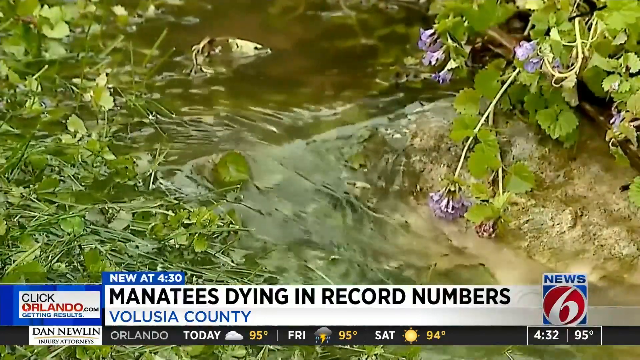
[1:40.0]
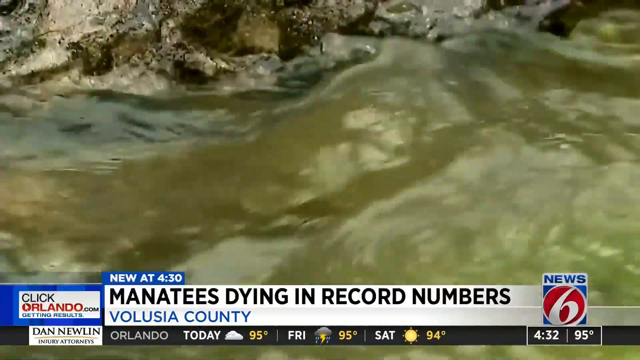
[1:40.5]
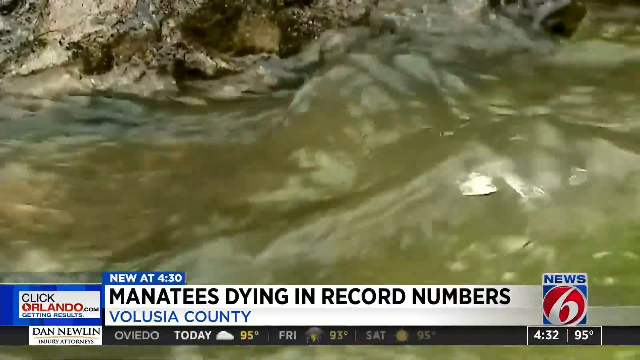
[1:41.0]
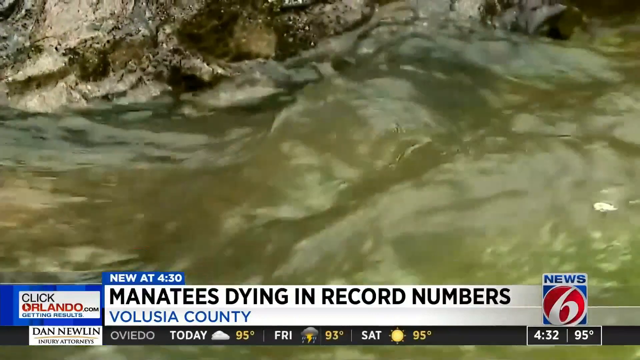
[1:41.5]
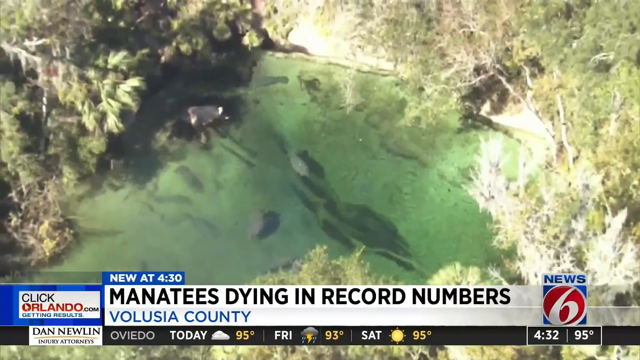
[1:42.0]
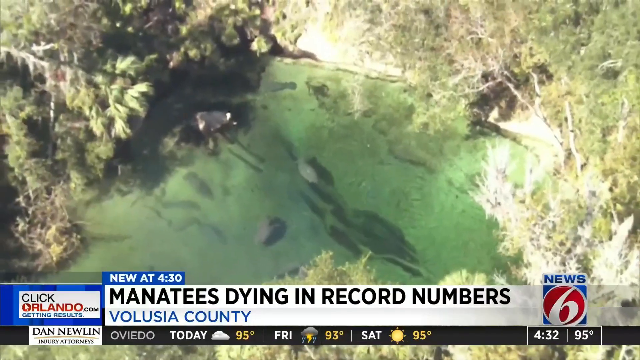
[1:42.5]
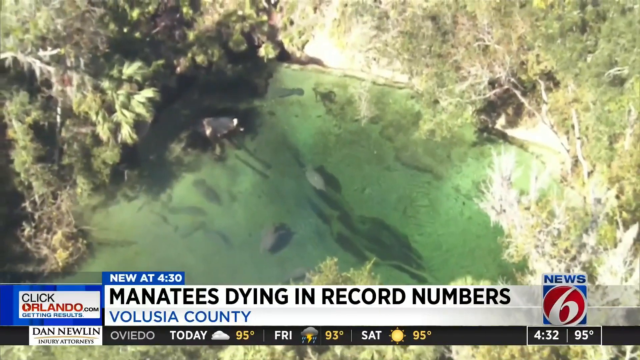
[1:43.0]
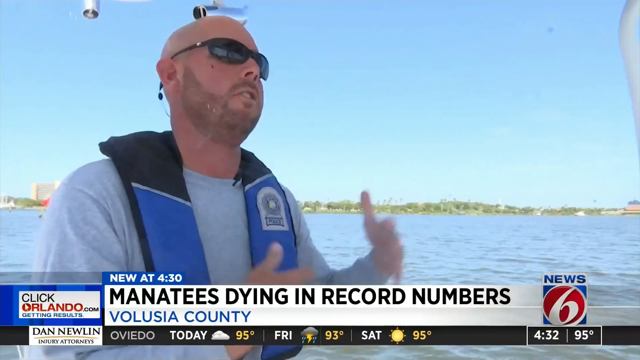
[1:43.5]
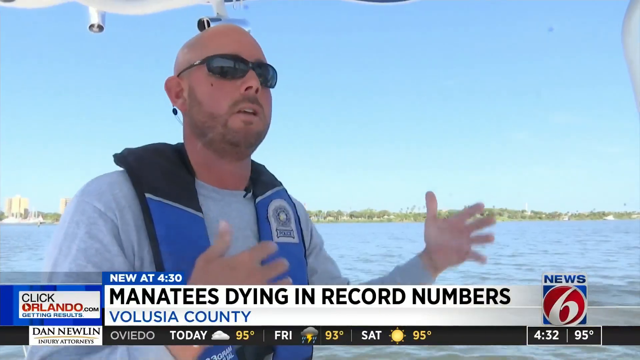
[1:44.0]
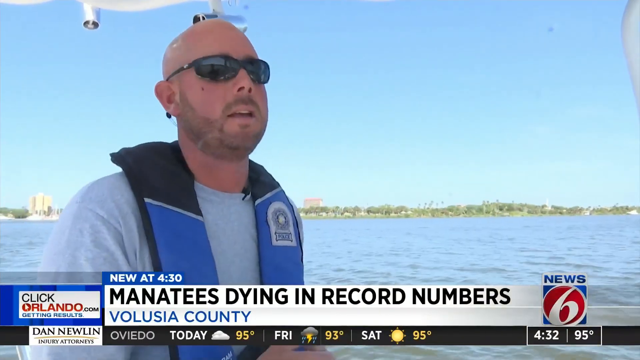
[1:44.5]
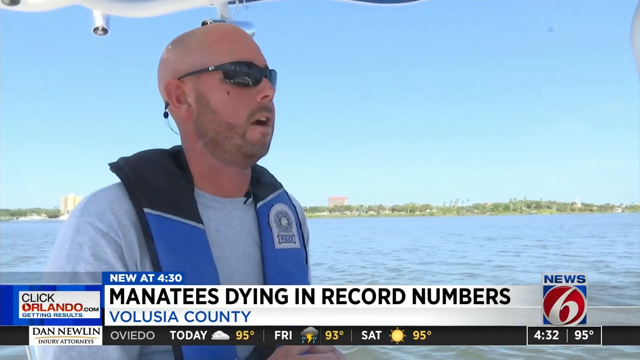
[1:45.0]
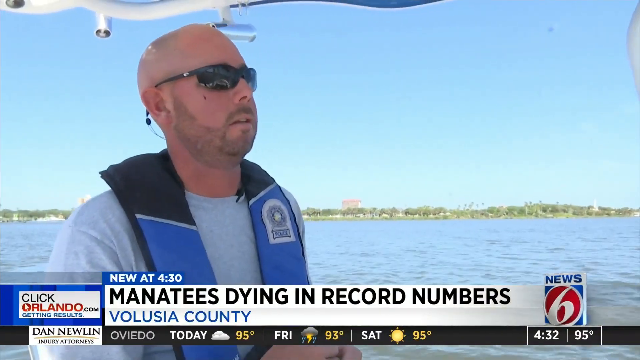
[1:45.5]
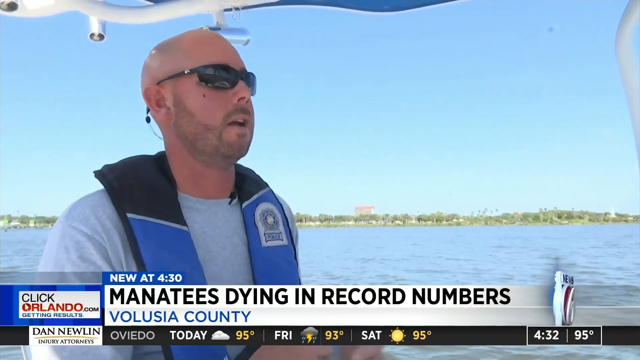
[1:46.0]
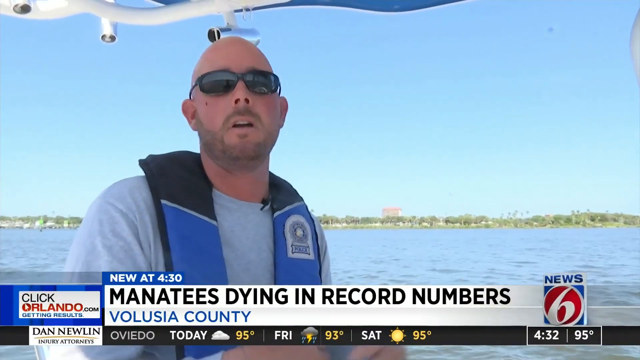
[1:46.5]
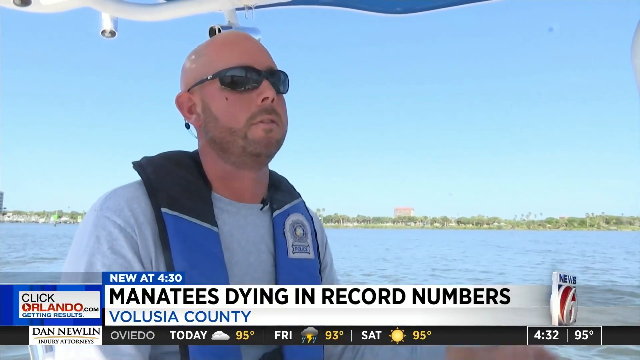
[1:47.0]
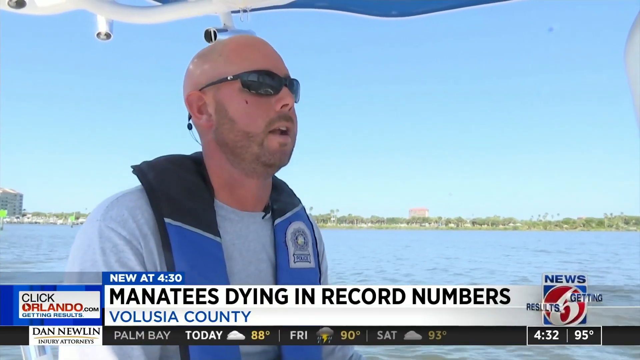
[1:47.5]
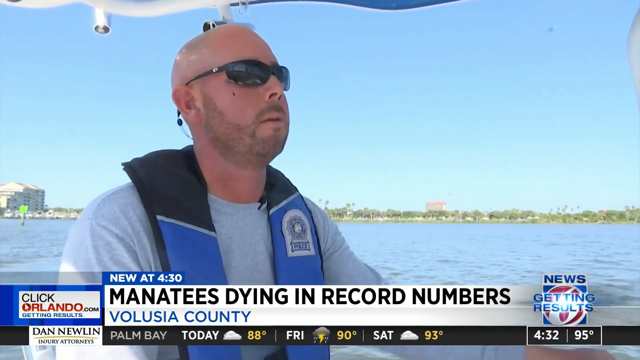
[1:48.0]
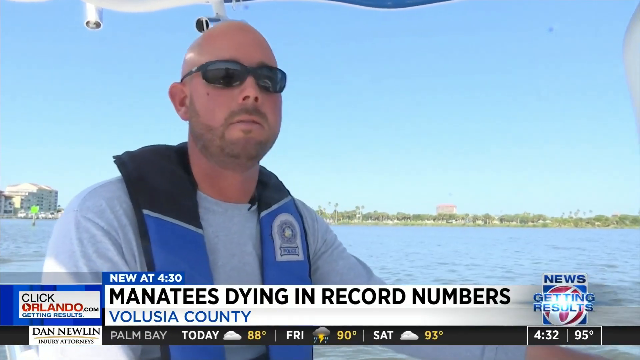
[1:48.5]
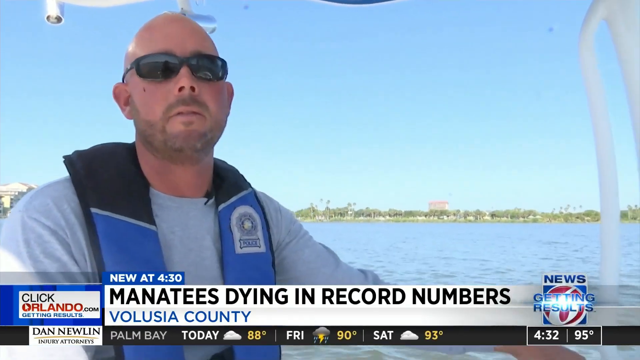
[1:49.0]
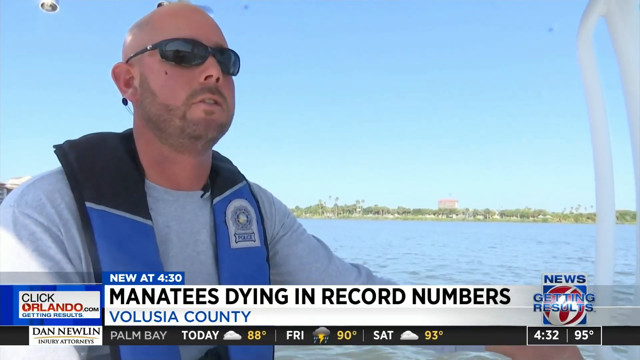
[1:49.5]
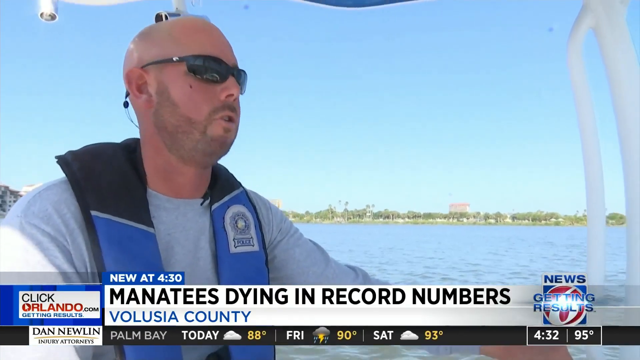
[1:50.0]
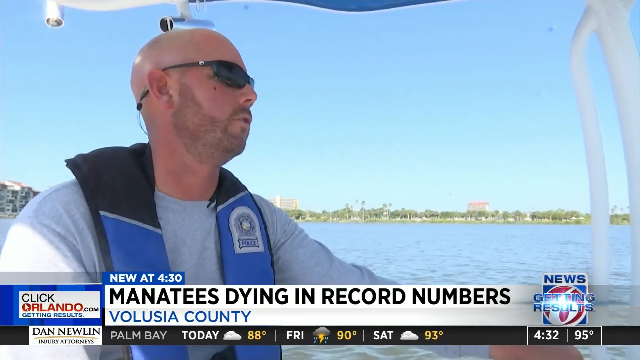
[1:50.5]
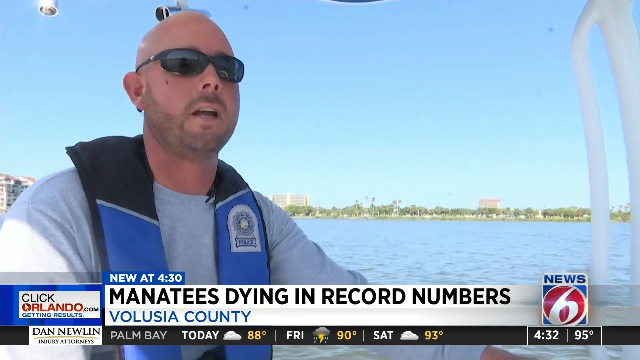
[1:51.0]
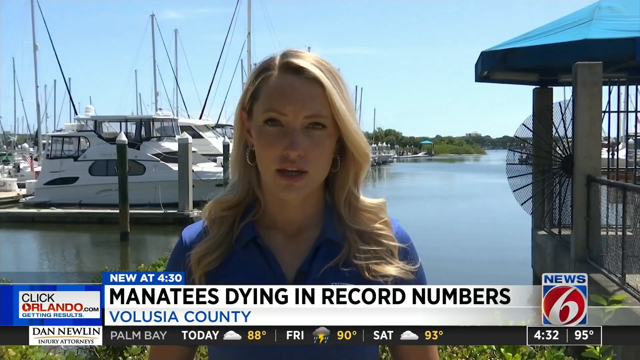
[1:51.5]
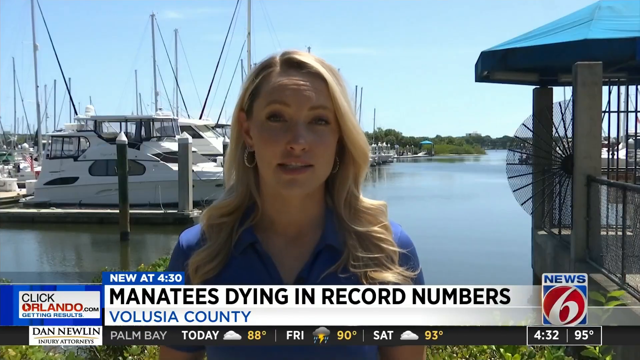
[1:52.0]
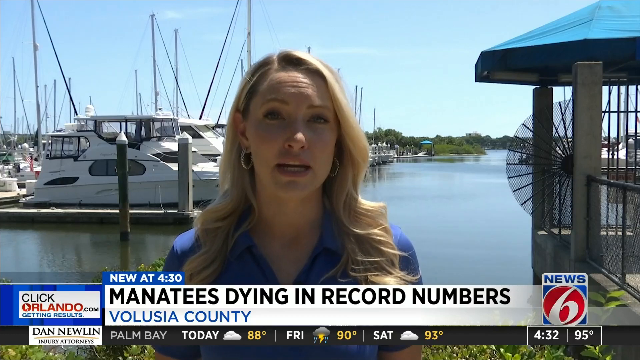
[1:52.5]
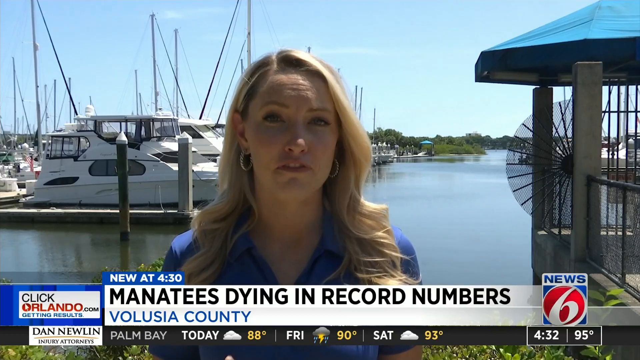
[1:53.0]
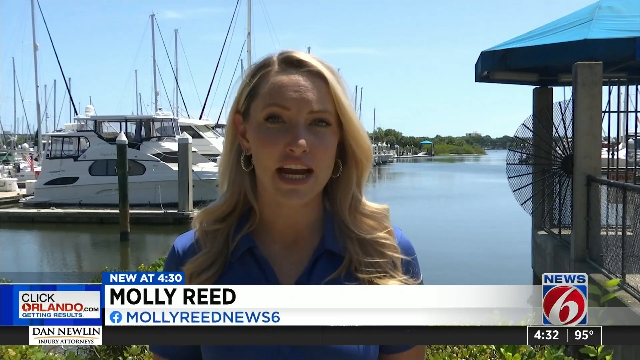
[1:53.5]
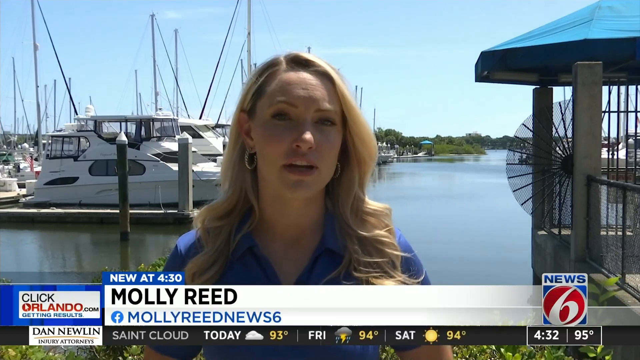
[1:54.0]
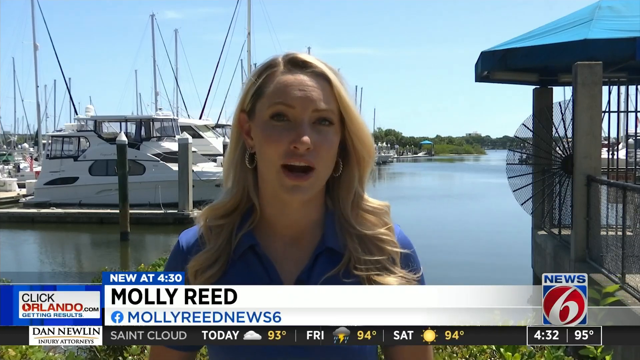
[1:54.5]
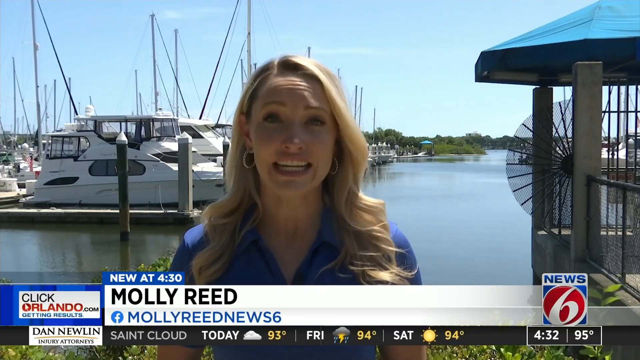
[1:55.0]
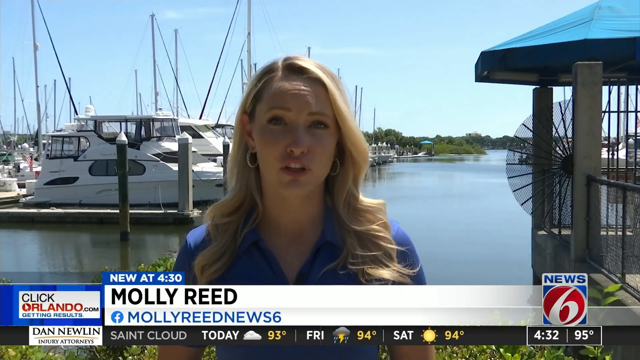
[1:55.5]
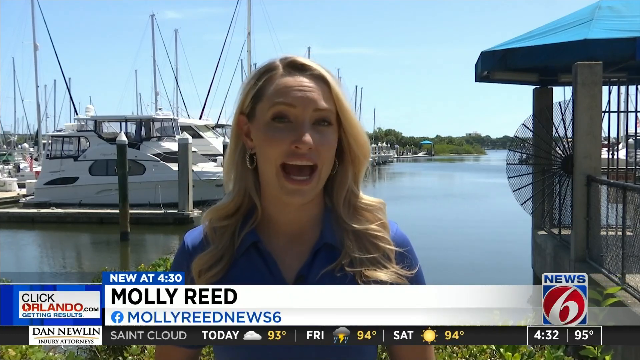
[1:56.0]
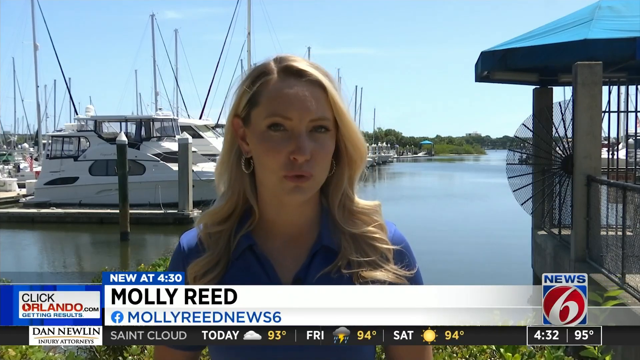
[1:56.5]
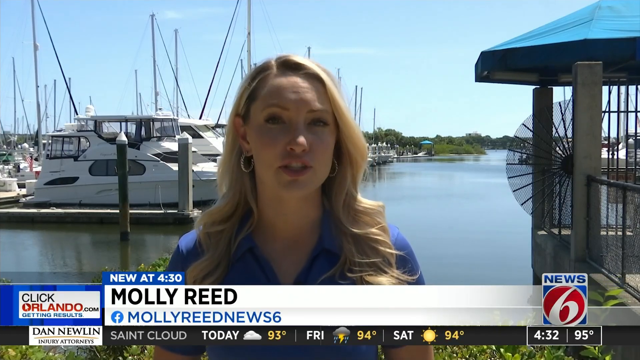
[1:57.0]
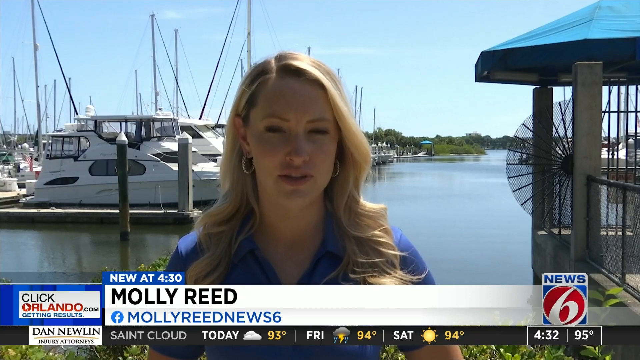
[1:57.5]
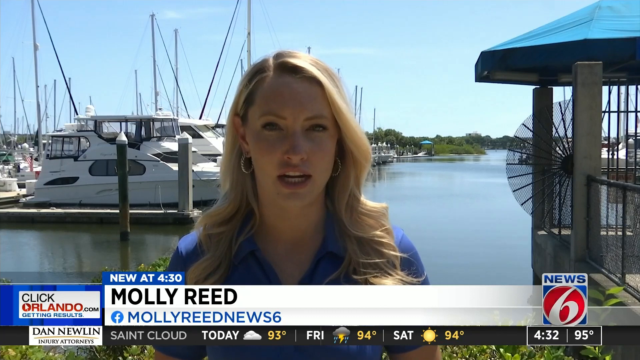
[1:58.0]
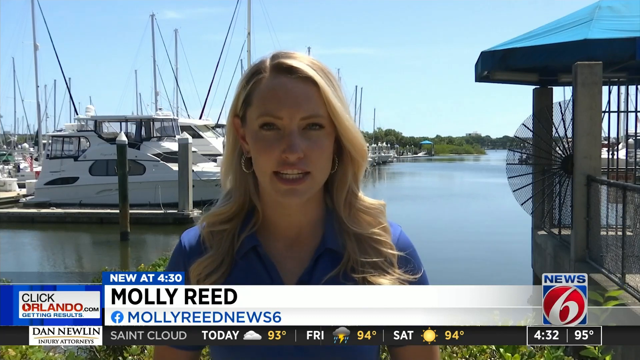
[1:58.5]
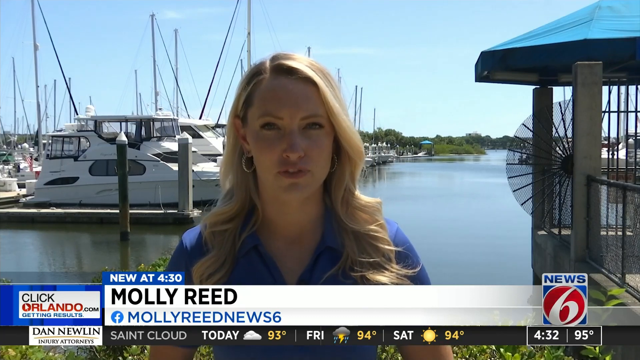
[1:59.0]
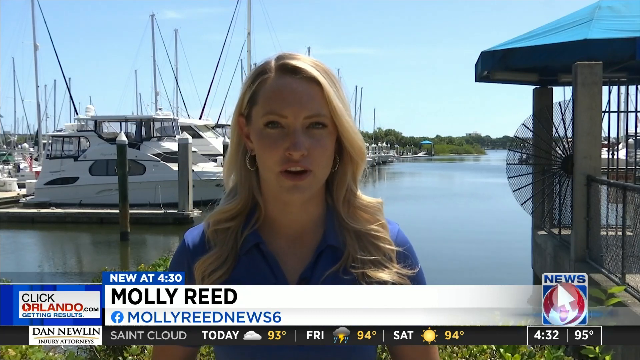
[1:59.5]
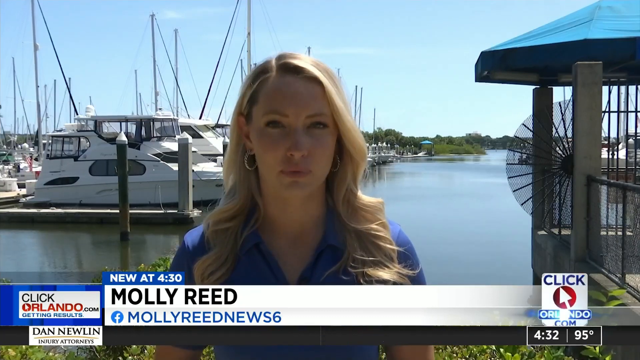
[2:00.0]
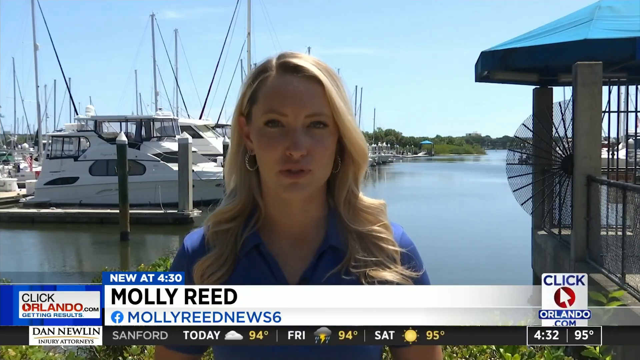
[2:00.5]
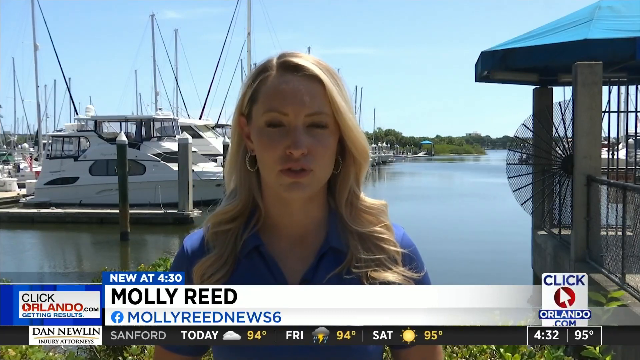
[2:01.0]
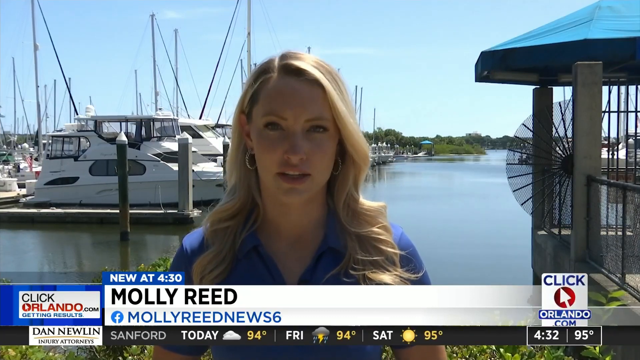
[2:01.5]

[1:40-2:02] A shot shows quickly running water, followed by a long overhead shot of some manatees in a bay. The bald cop with a beard and sunglasses talks to the camera crew. The video switches to Molly Reed, a newscaster, apparently in Orlando, who wears a blue dress or a blue top, earrings, and has blonde hair. She holds a microphone and speaks to the camera, looking very stern. Another shot shows the vegetation and the creek or small river running through it. No more dead manatees are shown; the manatees shown are alive and seem well. The trees and plants are green and lush, and everything looks well taken care of.